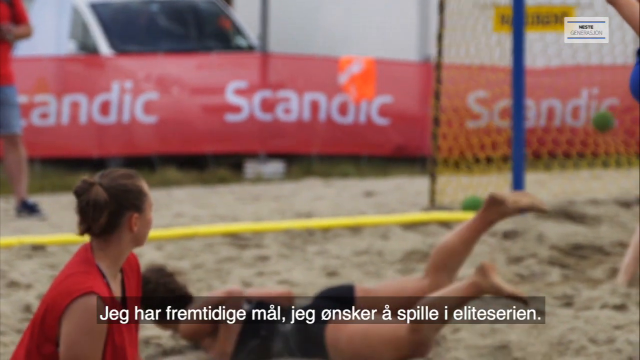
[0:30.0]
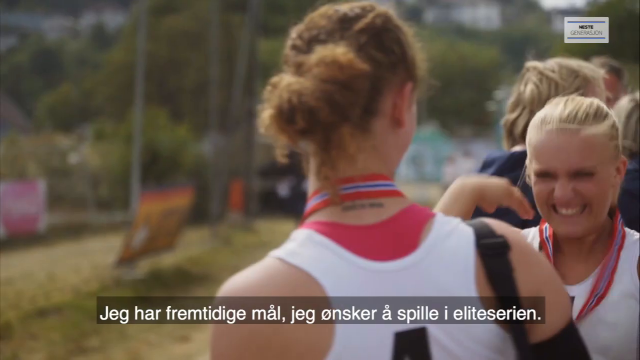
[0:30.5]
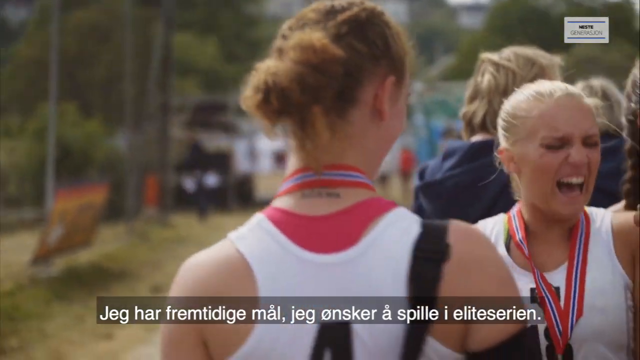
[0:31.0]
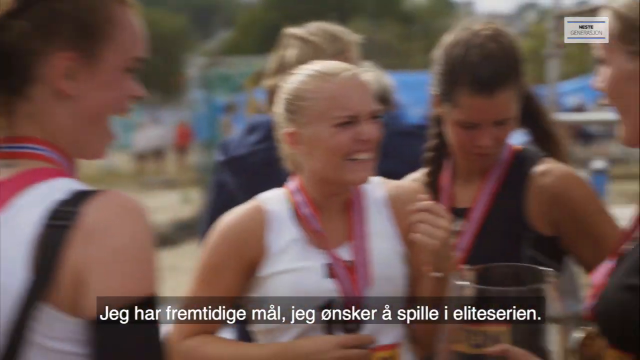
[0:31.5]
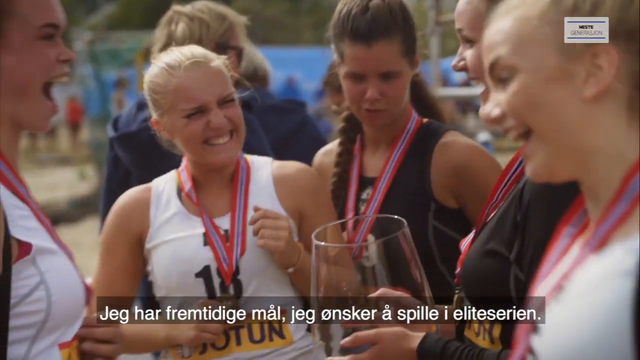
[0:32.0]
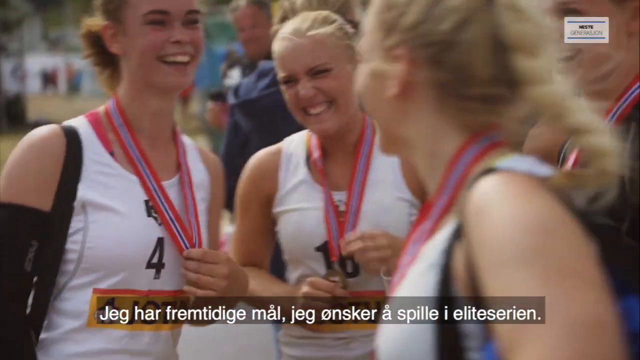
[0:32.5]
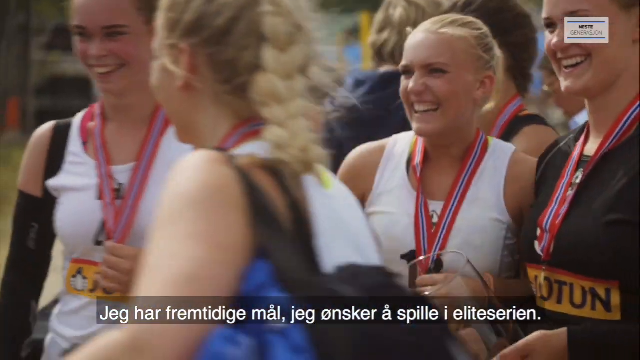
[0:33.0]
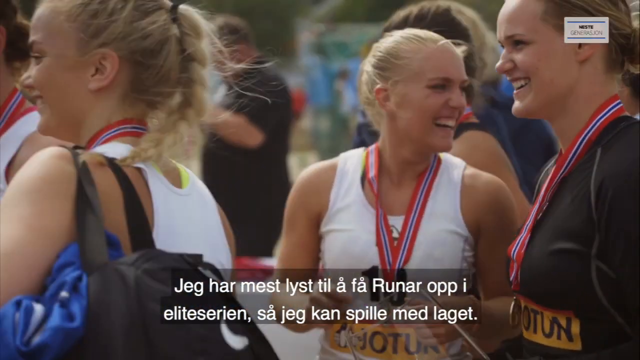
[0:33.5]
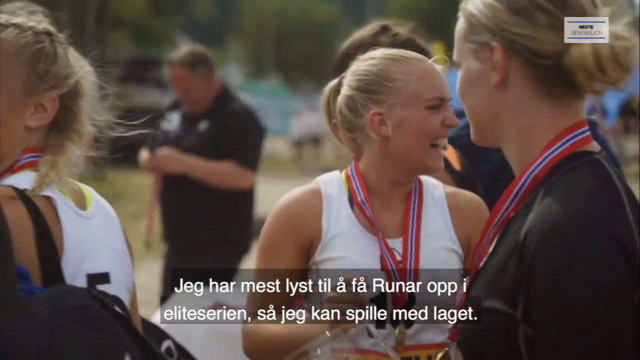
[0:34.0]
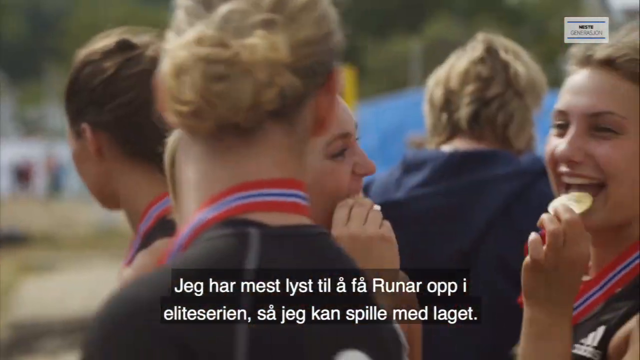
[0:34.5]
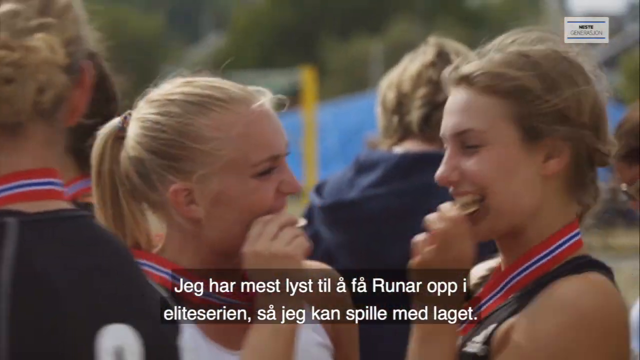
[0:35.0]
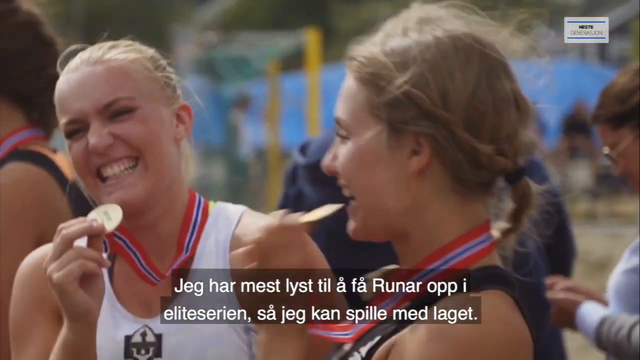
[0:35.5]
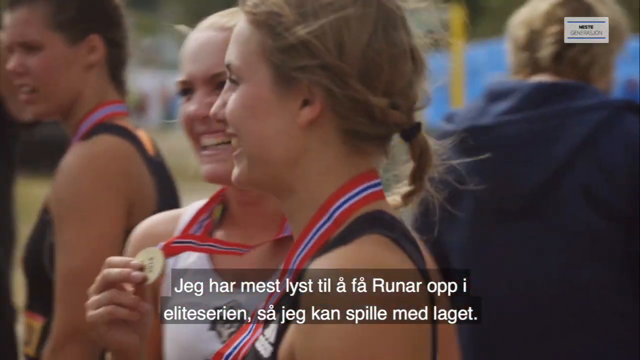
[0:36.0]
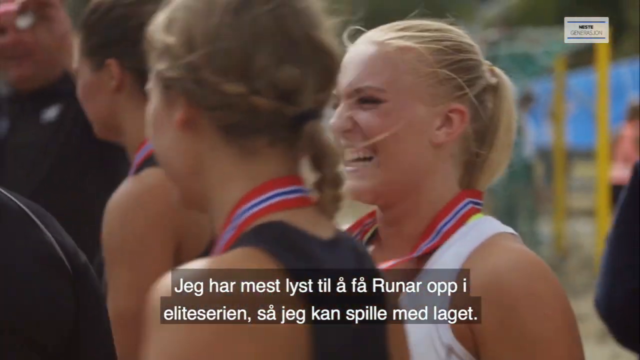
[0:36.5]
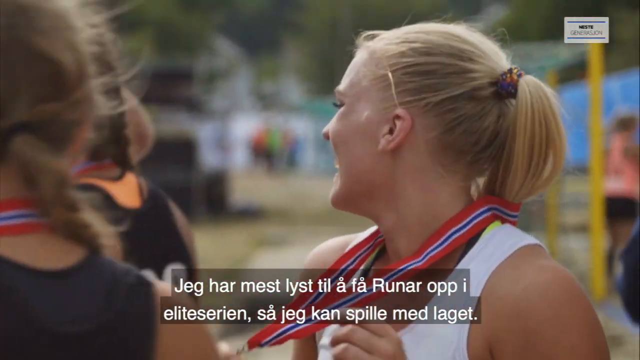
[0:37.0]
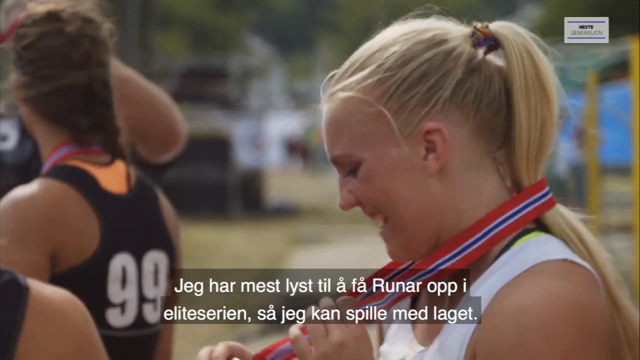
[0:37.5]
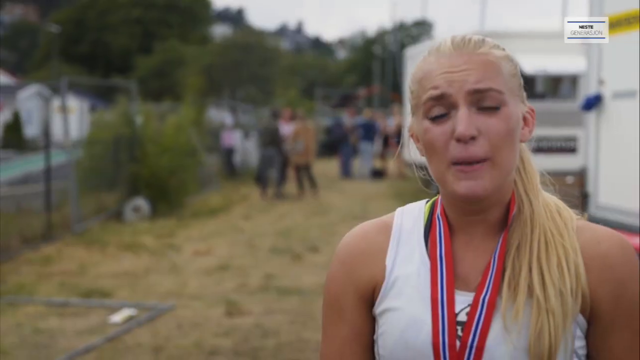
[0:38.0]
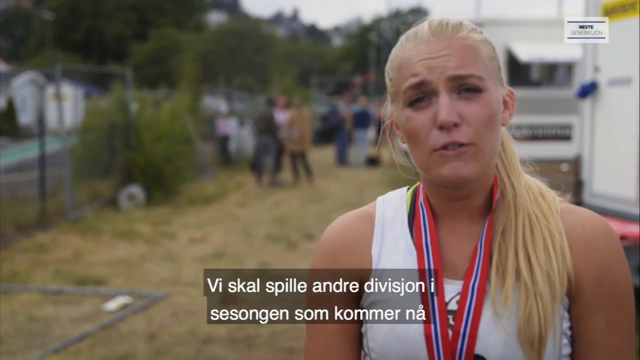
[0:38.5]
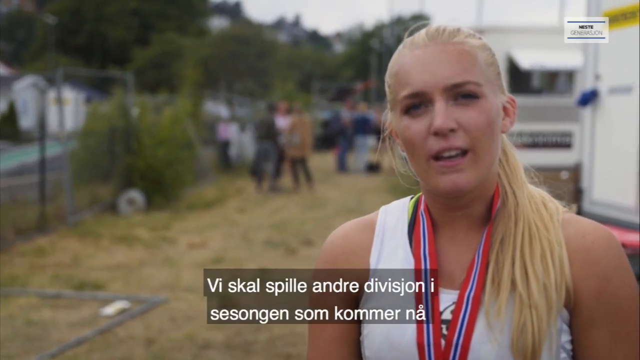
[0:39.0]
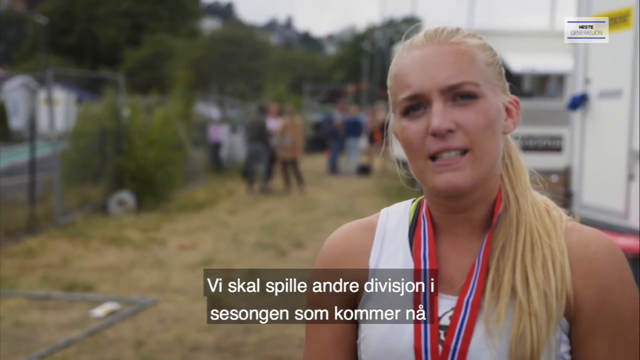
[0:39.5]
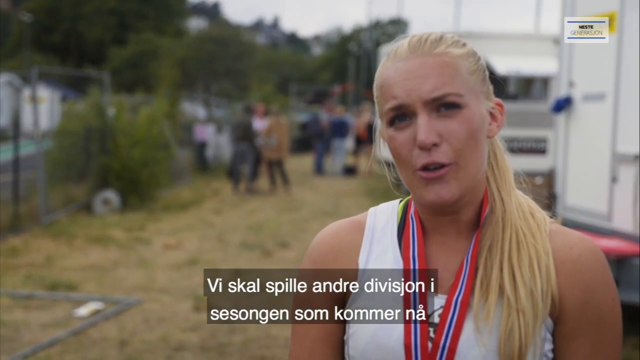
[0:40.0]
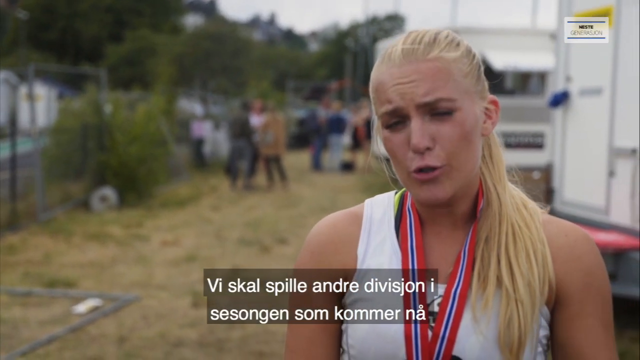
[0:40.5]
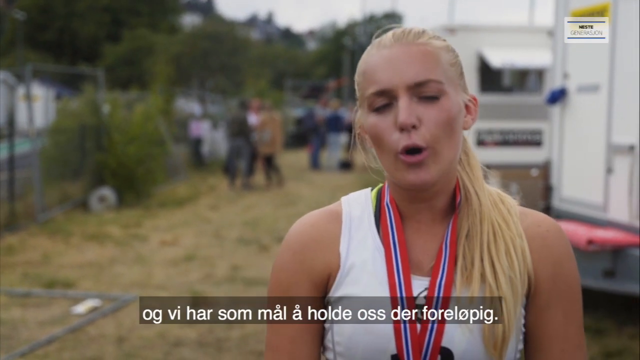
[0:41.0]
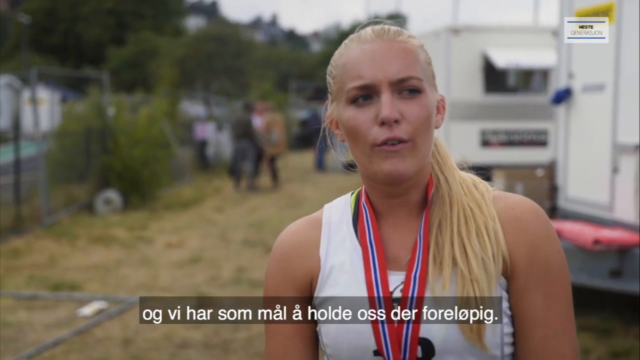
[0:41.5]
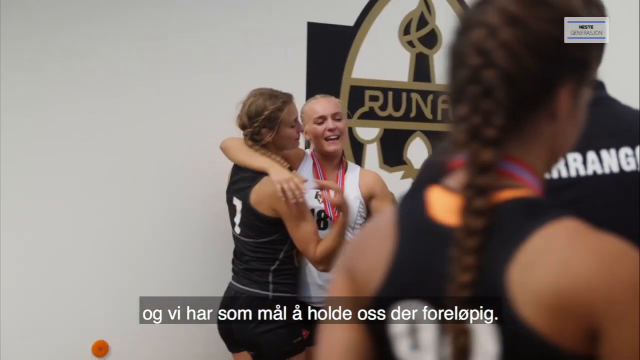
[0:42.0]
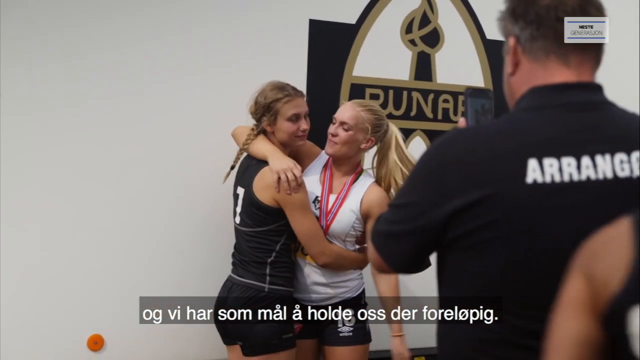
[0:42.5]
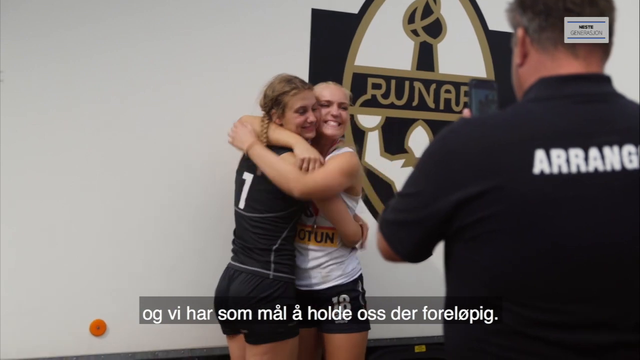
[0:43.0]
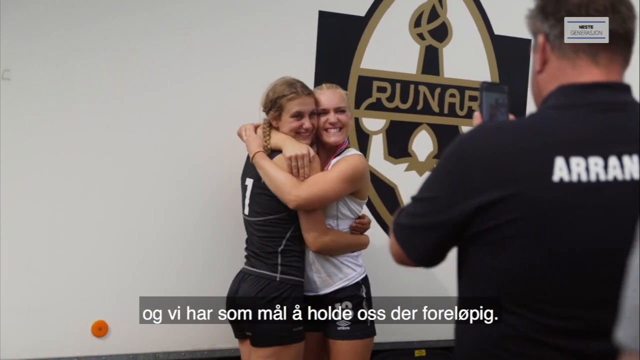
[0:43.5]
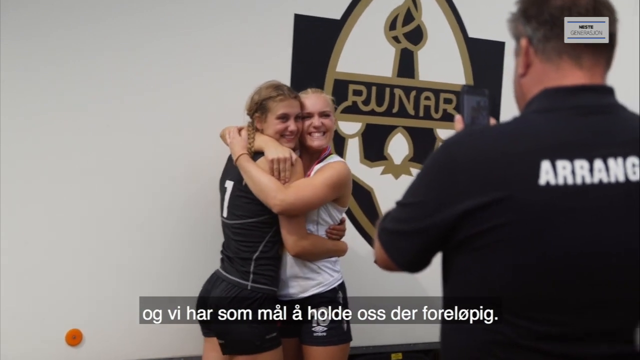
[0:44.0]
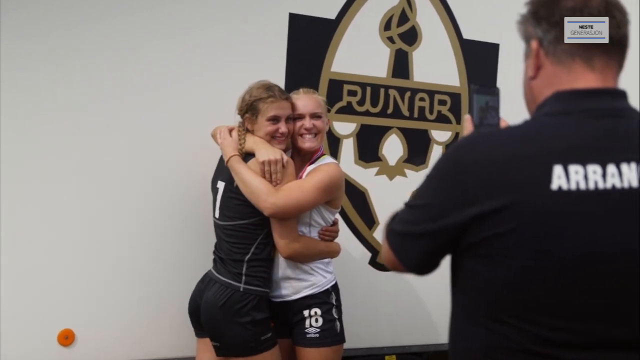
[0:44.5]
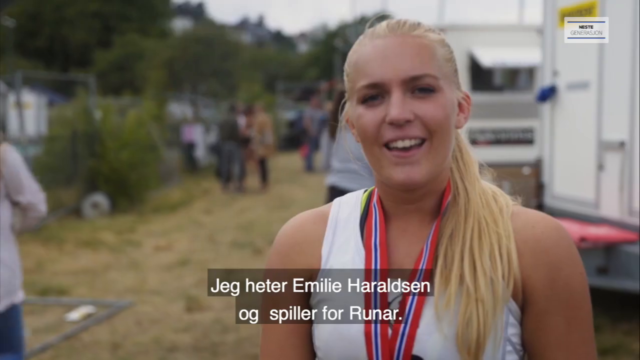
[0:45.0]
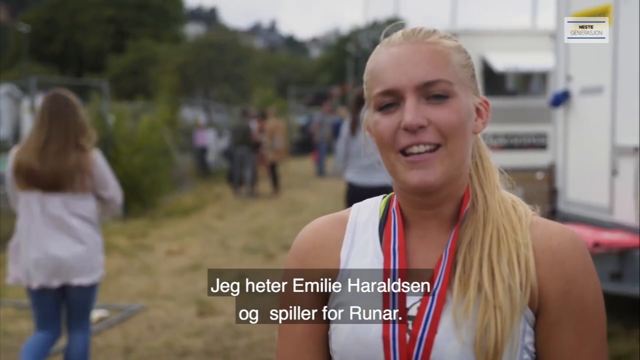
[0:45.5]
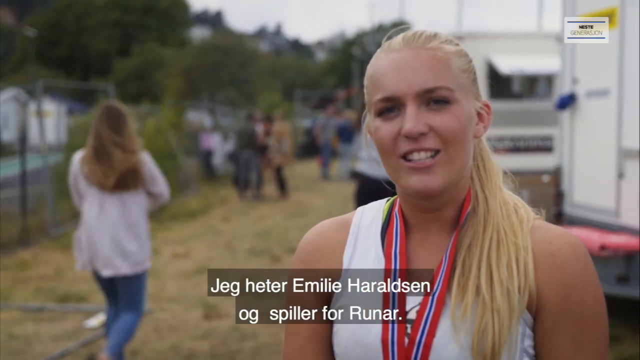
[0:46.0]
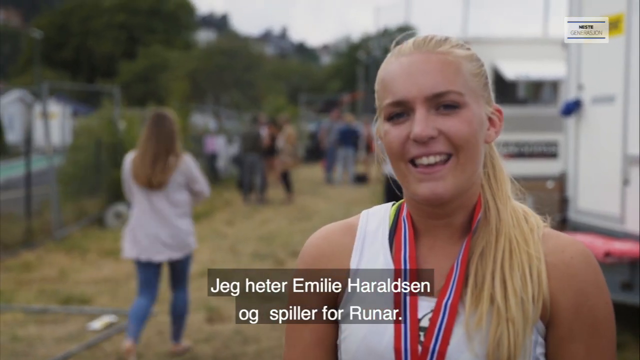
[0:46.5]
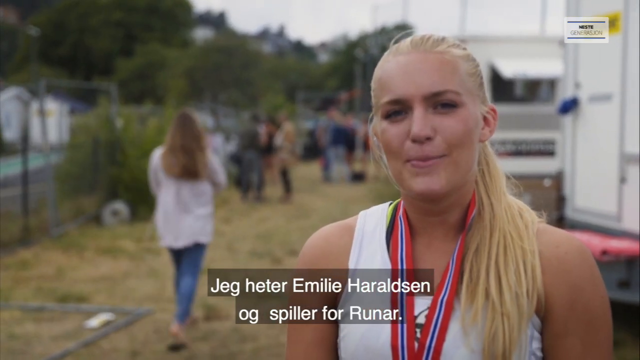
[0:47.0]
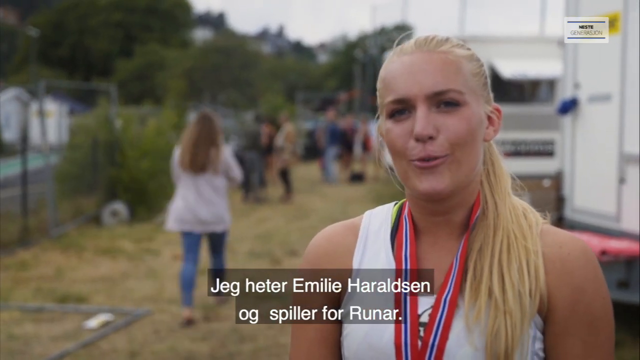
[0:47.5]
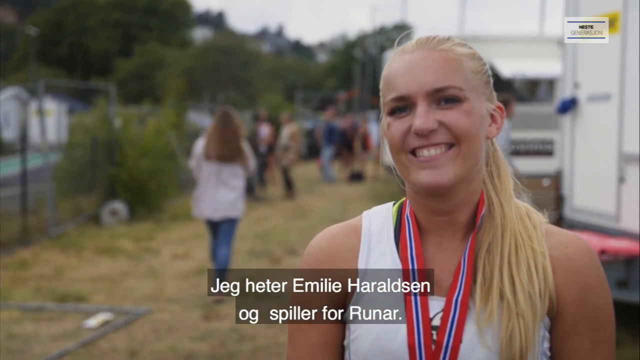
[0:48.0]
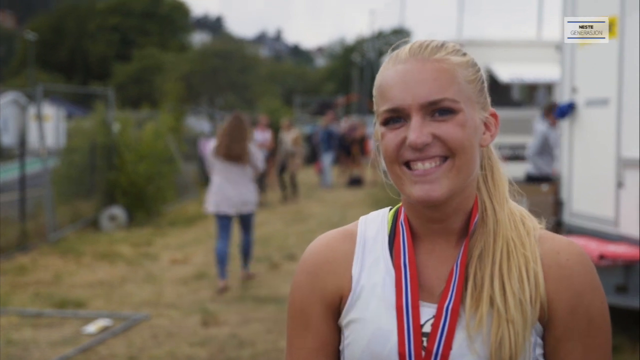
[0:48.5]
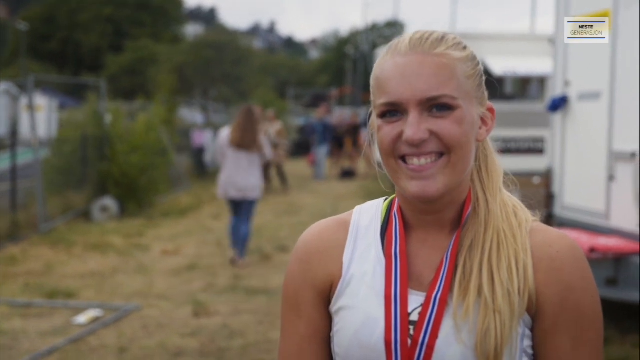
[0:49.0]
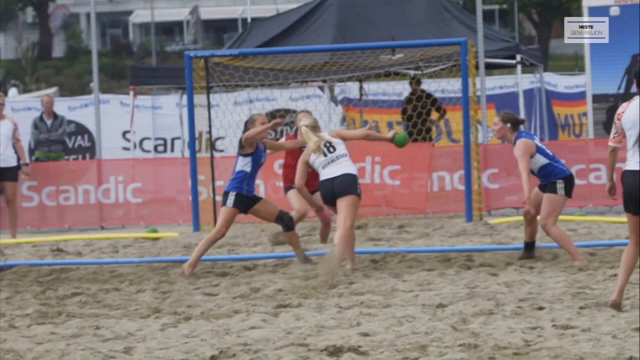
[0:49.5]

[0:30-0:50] Girls with medals around their necks are talking. They then put the medals between their teeth and bite down in celebration. The girl with long blonde hair and the white shirt and a teammate in a black shirt hug in front of photographers who appear to be taking their picture. Some of the girls have braided hair, while others have their hair pulled back in ponytails. Other competitors and players are in the background. The setting changes several times, from the field to a room with a photographer in front of a marking, and back to the field of play, with flashbacks of the game in which players throw a green ball into a net to score goals while the other team, wearing blue and white shirts, tries to block it.